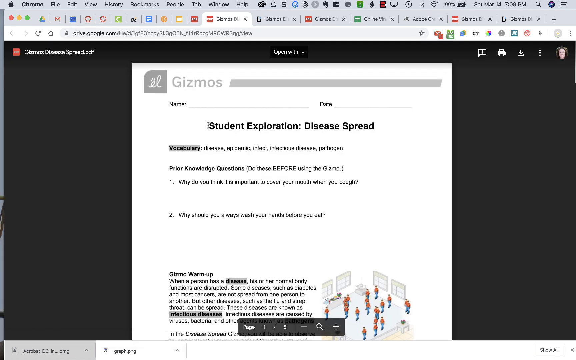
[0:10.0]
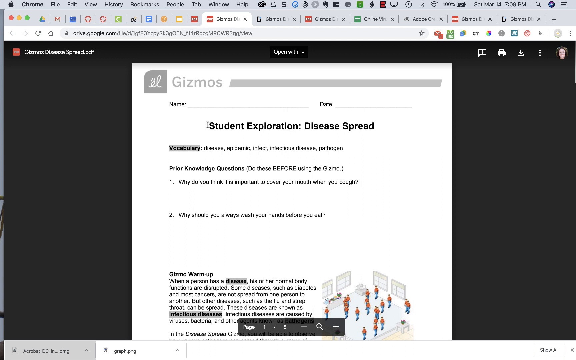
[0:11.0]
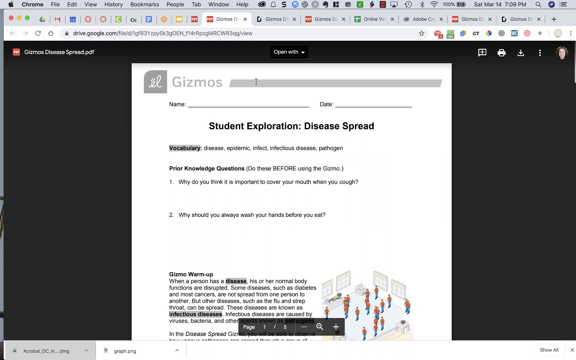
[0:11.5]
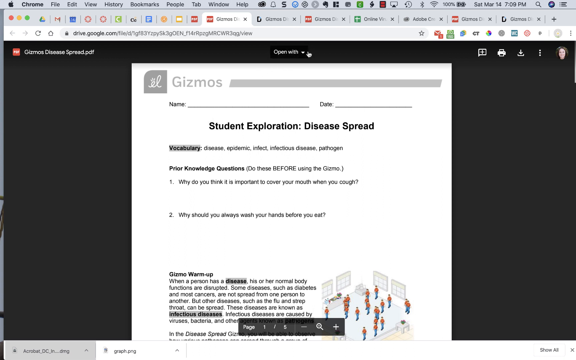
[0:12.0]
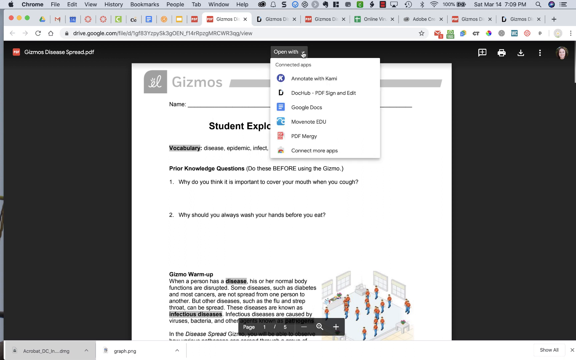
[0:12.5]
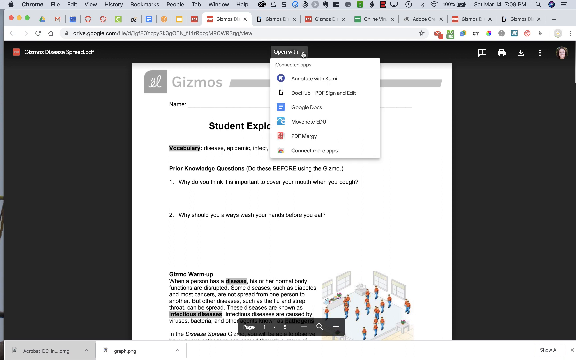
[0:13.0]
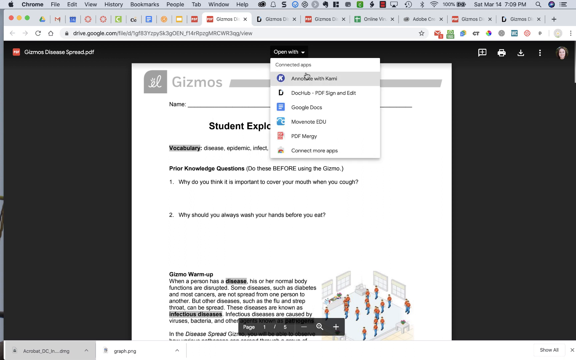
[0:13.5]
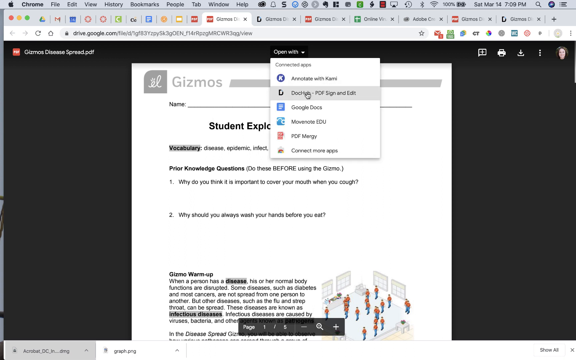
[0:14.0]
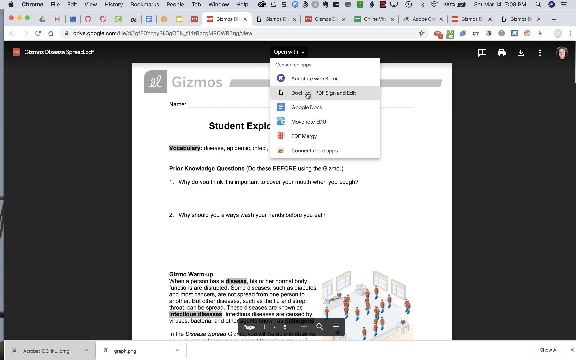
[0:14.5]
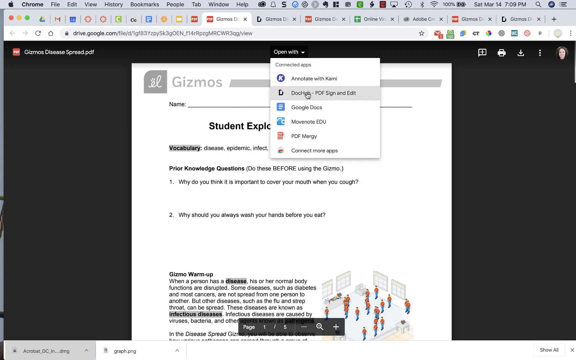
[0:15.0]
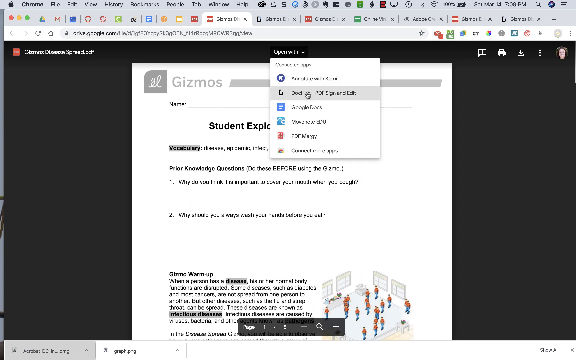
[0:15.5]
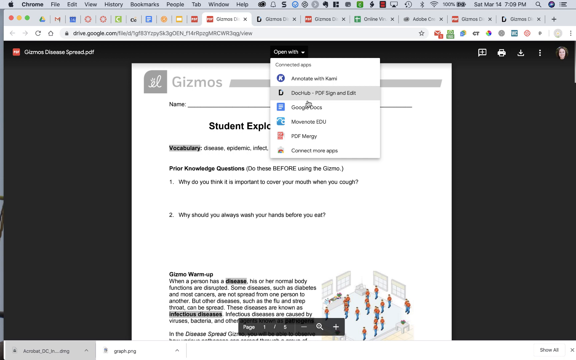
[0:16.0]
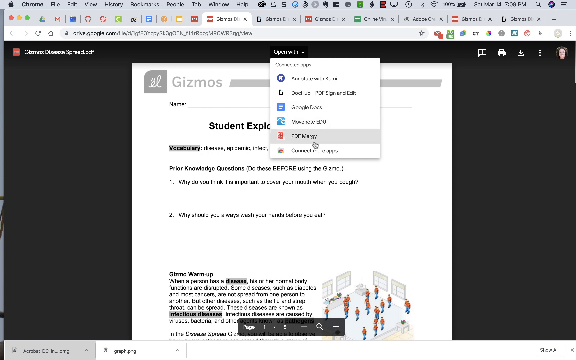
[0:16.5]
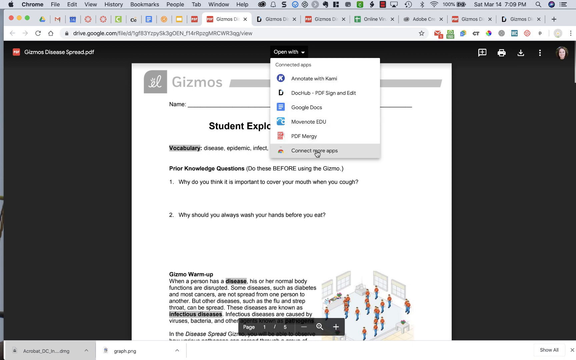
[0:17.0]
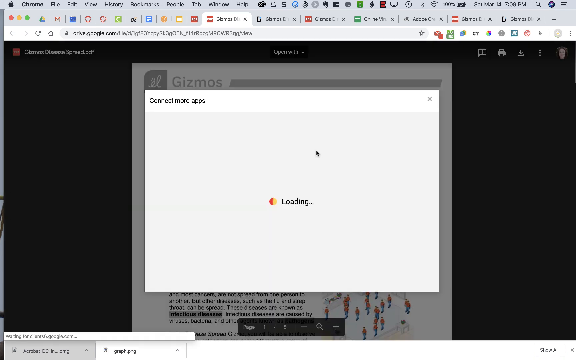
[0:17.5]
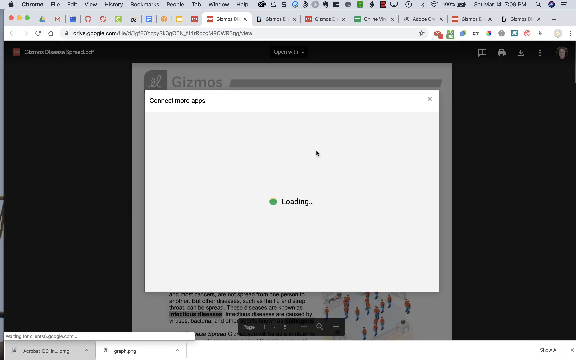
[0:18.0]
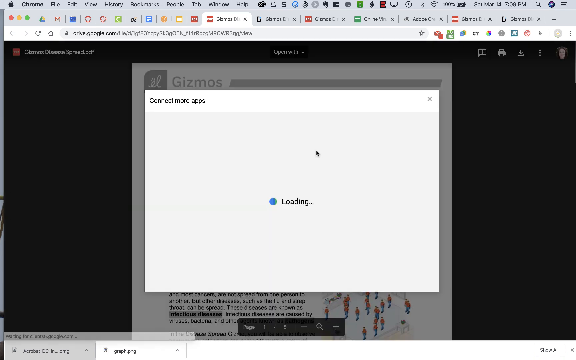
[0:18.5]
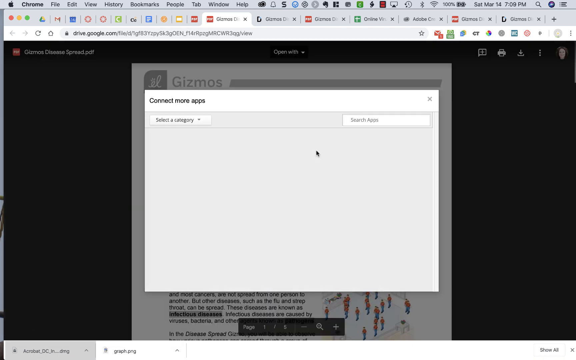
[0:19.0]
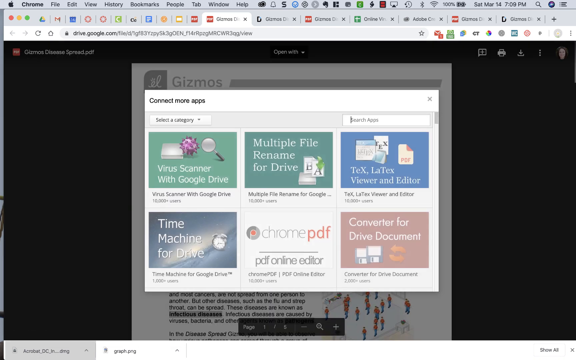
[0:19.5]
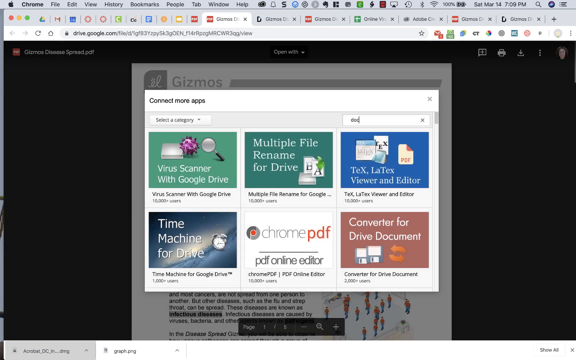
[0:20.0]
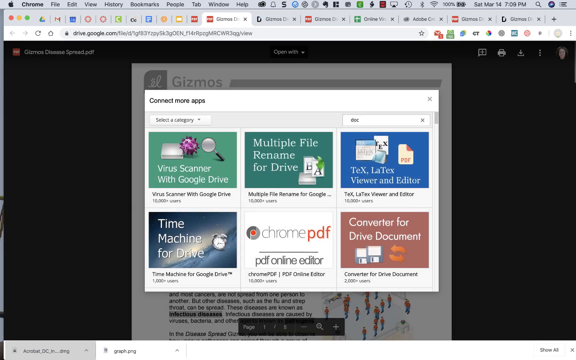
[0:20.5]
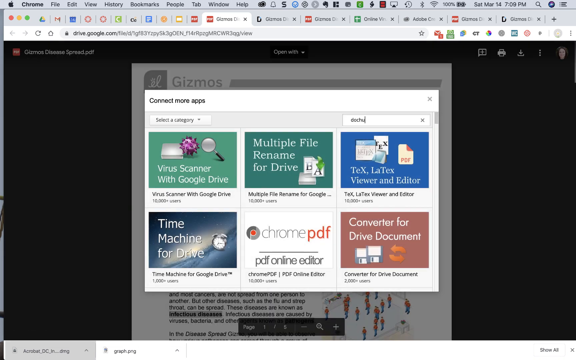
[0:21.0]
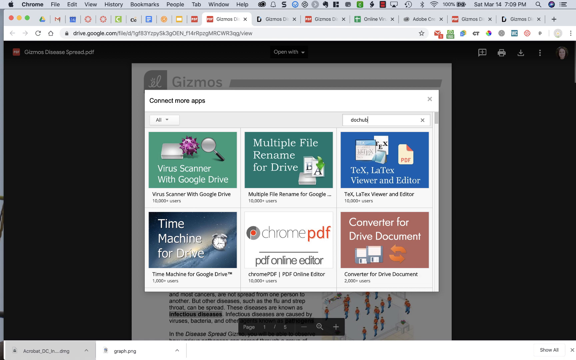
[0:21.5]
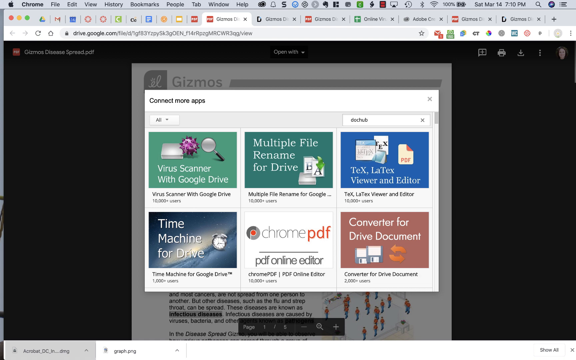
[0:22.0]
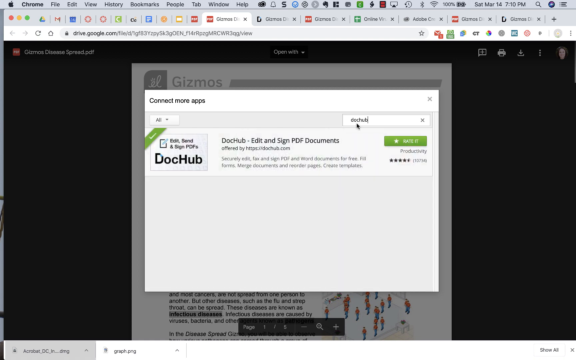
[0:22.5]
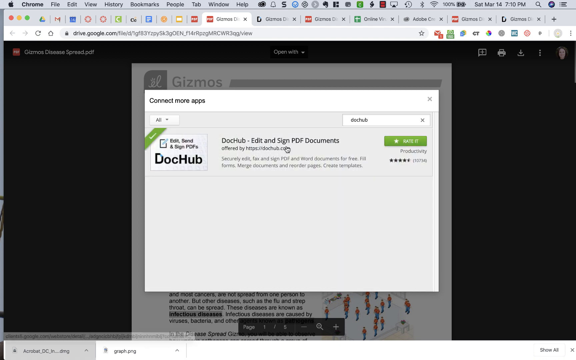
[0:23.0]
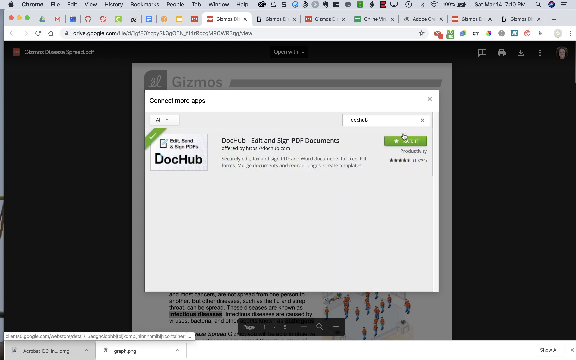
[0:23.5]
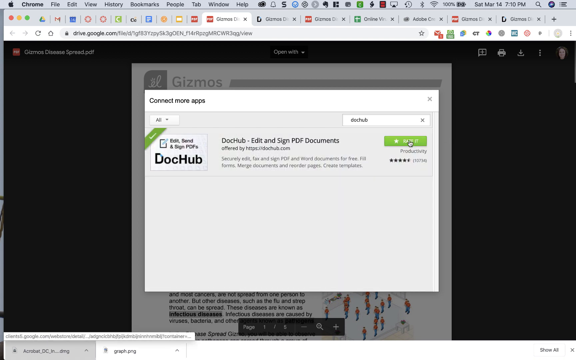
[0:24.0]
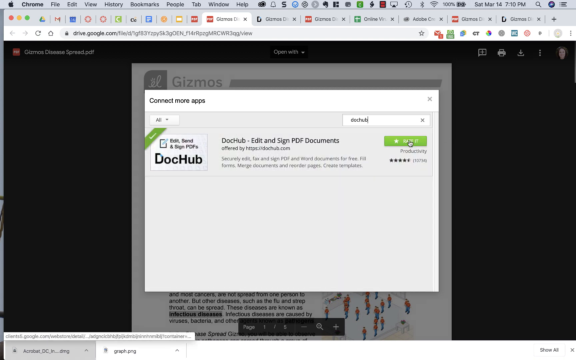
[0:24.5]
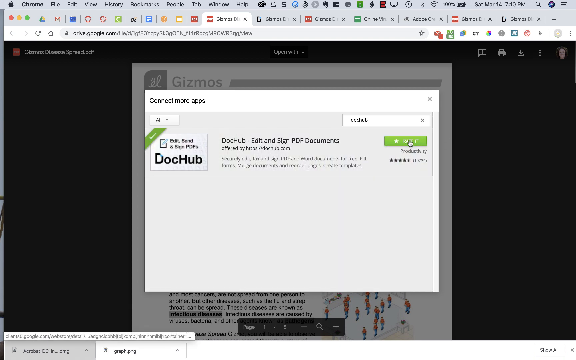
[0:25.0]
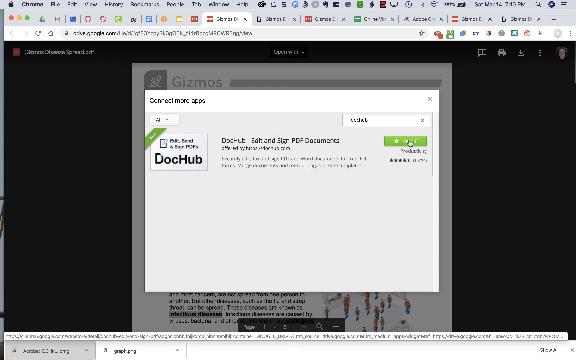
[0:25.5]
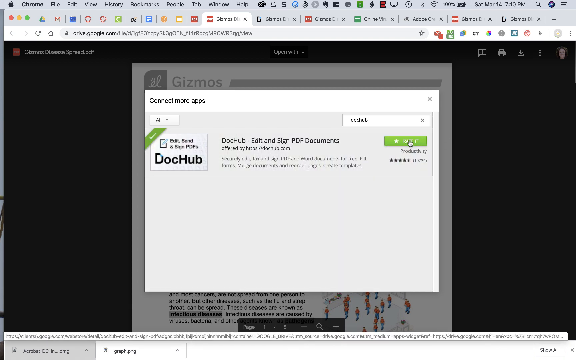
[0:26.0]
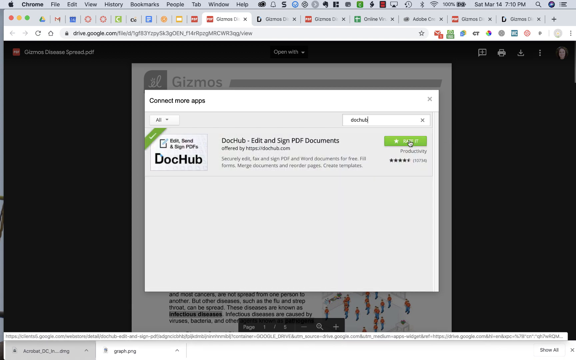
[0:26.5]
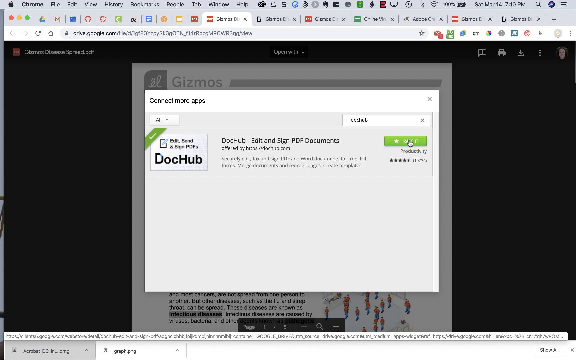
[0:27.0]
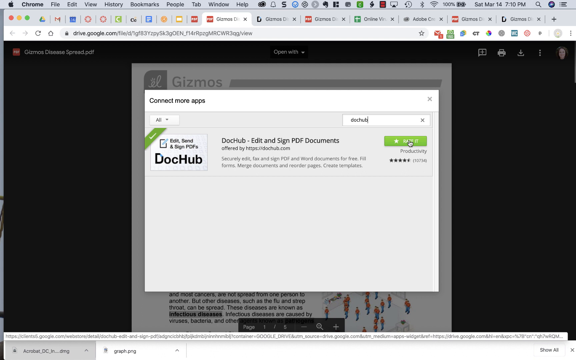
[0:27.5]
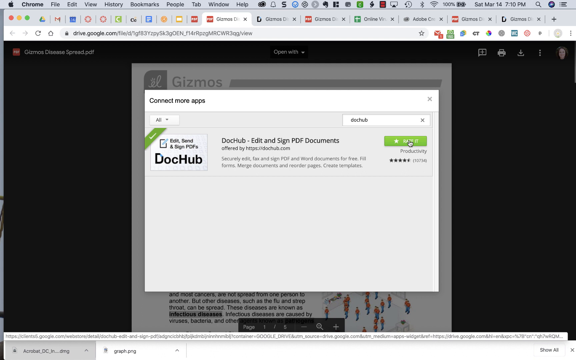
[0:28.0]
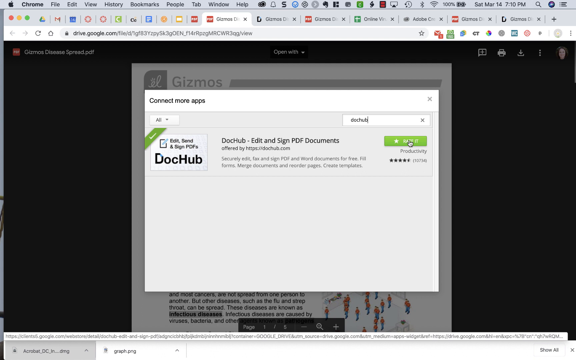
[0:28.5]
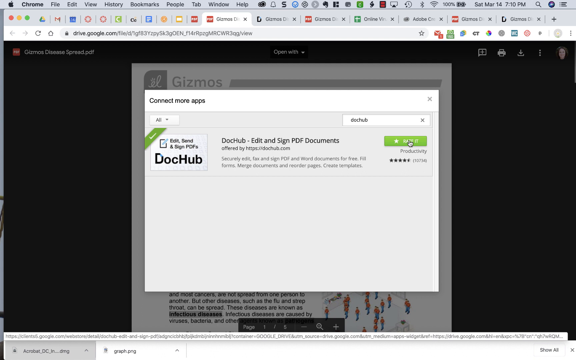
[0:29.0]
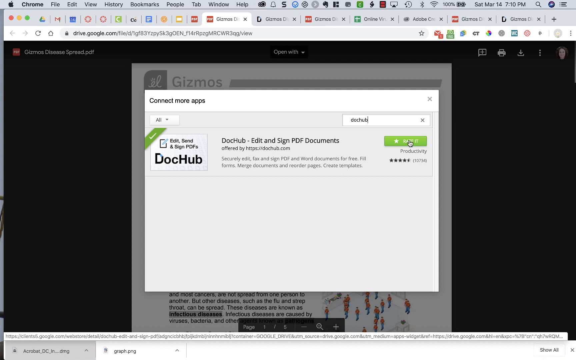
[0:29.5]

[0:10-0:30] A screen for gizmosdiseasespread.pdf is shown, with fields to type in a name and a date. Black text says "student exploration disease spread," followed by vocabulary: "disease, epidemic, infect, infectious disease" and "pathogen." Bolded text says "prior knowledge questions, do these before using the gizmo," followed by "One, why do you think it is important to cover your mouth when you cough? Two, why should you always wash your hands before you eat?" There is a drawing of people wearing an orange and blue outfit in a room, and text that says "gizmo warm up. When a person has a disease, his or her normal body functions are disrupted. Some diseases such as diabetes and most cancers are not spread from one person to another, but other diseases such as the flu and strep throat can be spread. These diseases are known as infectious diseases. Infectious diseases are caused by viruses, bacteria, and other pathogens," where the text somewhat cuts off. The user clicks "open with" at the top and then "connect more apps," which loads a screen with a search bar. They type in DocHub, and an application called "DocHub edit and sign PDF documents" appears. The mouse hovers over a green button with a little white star next to it.